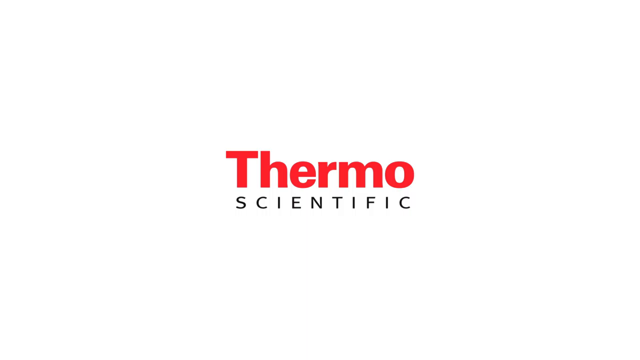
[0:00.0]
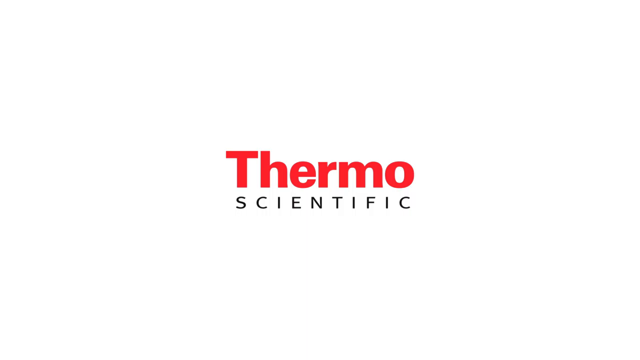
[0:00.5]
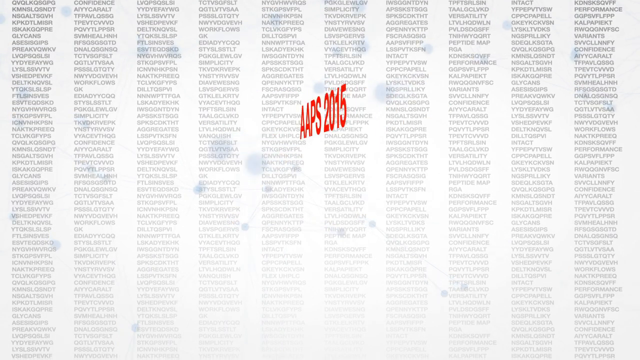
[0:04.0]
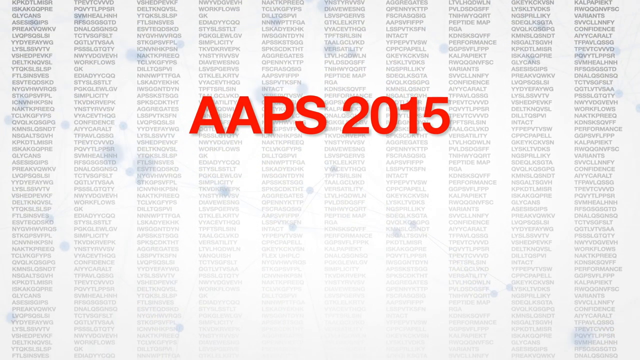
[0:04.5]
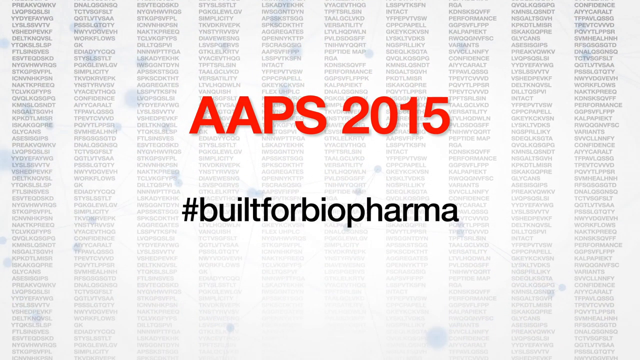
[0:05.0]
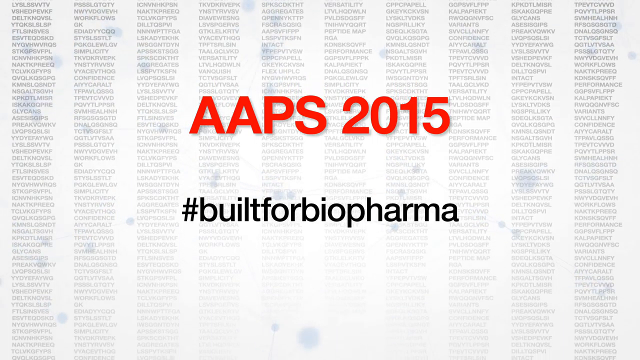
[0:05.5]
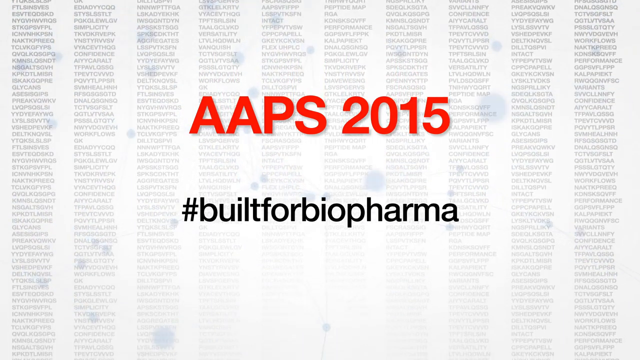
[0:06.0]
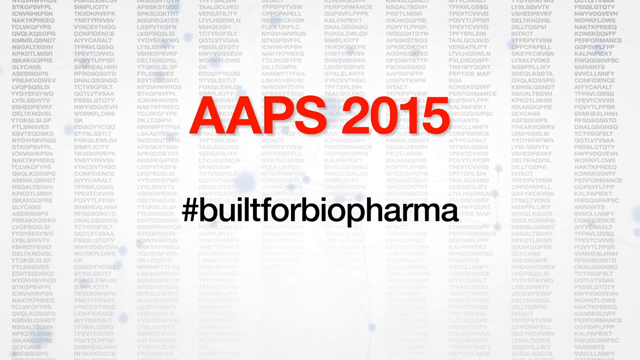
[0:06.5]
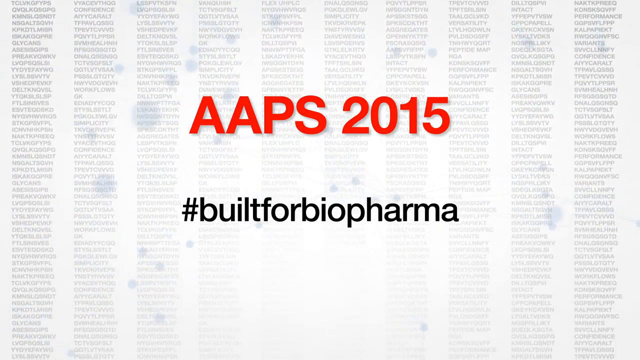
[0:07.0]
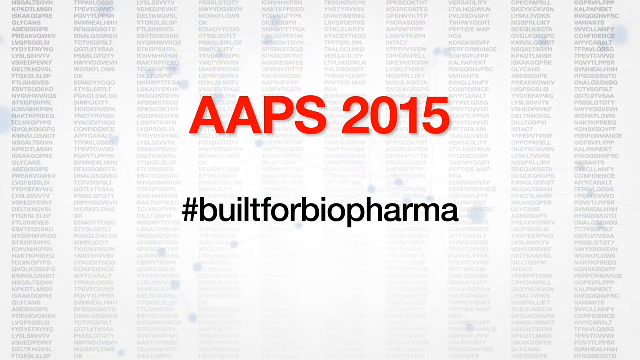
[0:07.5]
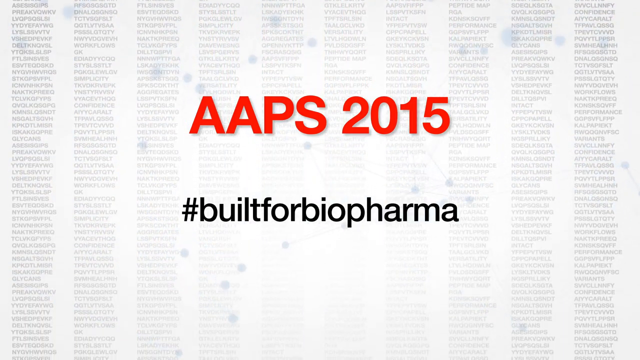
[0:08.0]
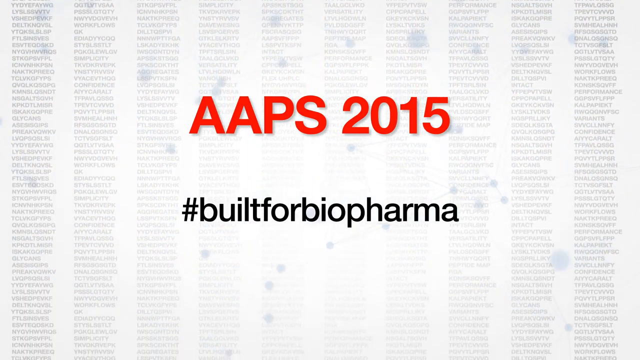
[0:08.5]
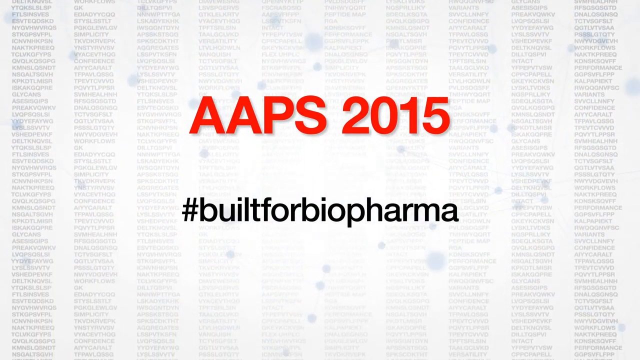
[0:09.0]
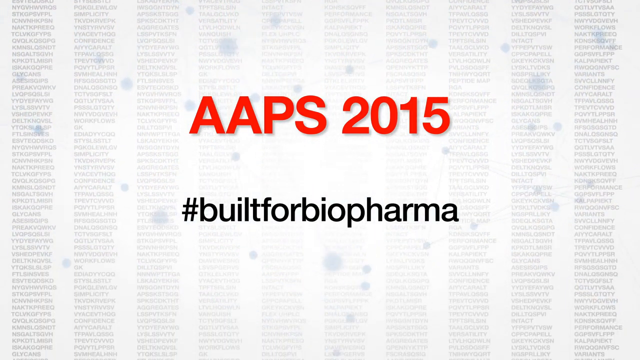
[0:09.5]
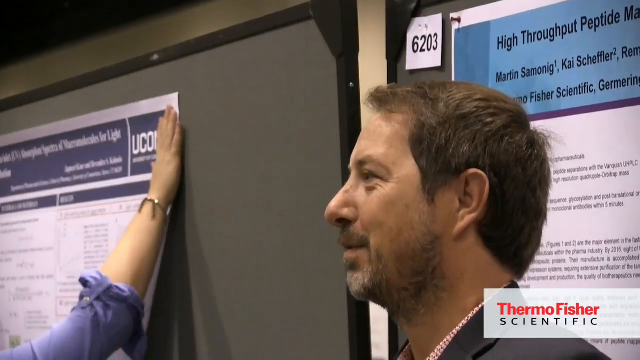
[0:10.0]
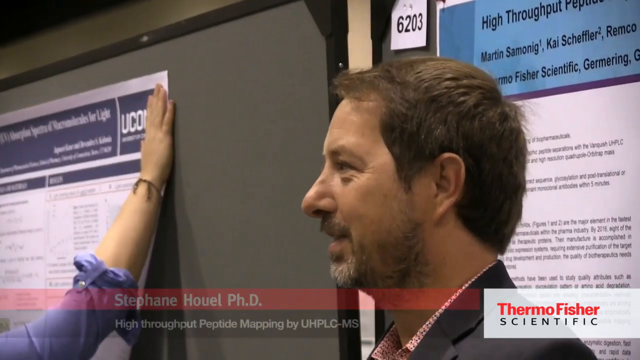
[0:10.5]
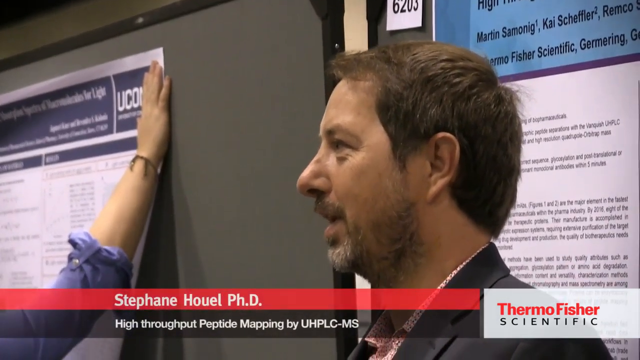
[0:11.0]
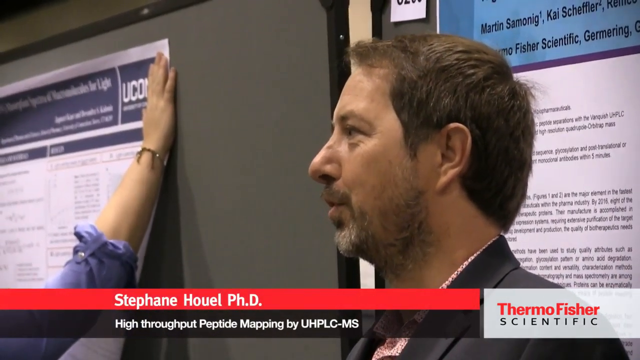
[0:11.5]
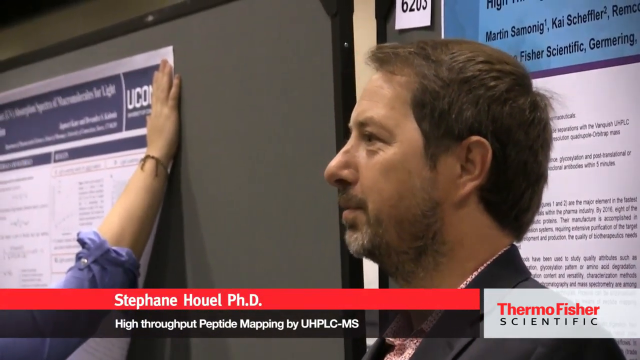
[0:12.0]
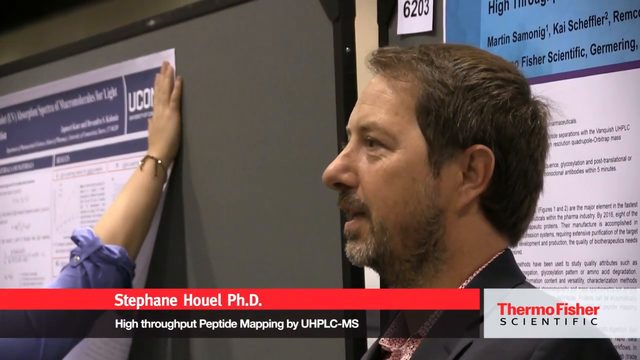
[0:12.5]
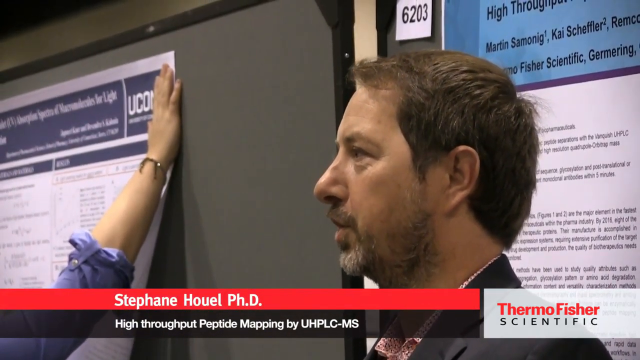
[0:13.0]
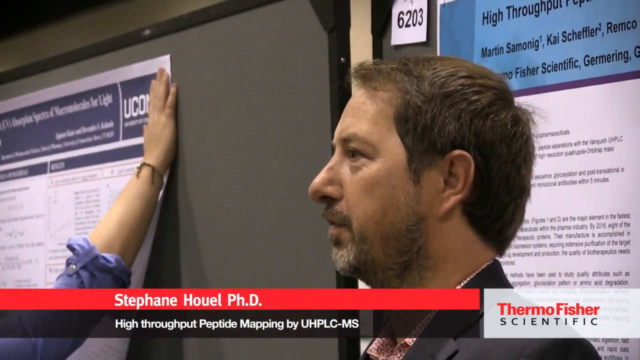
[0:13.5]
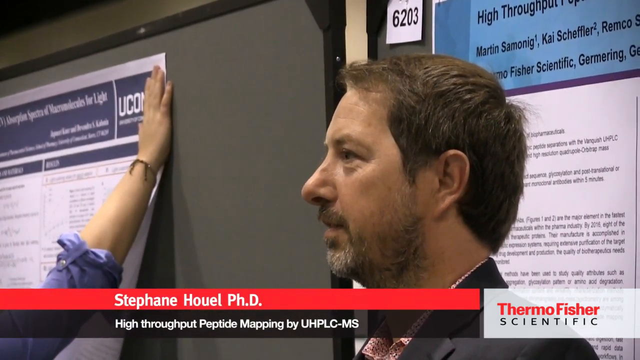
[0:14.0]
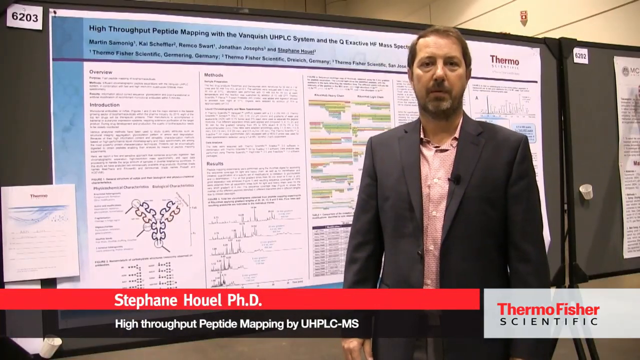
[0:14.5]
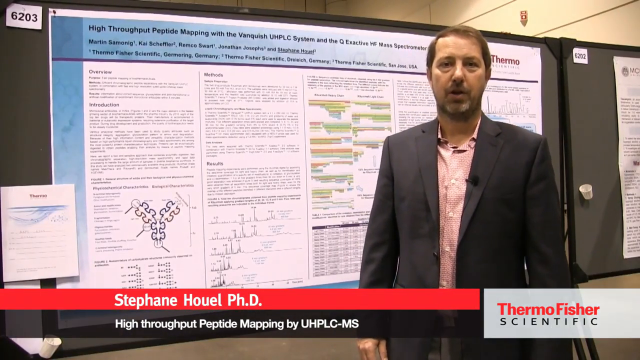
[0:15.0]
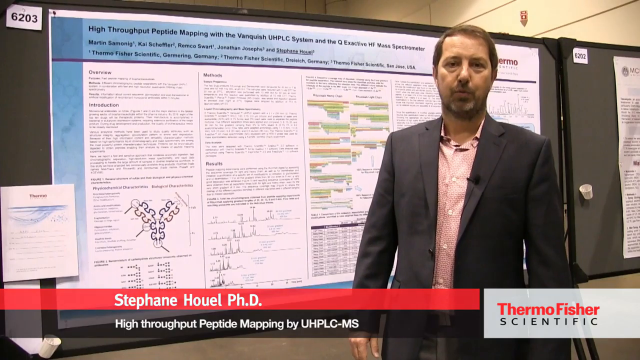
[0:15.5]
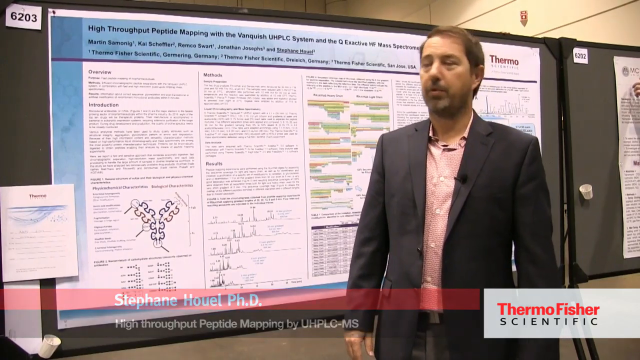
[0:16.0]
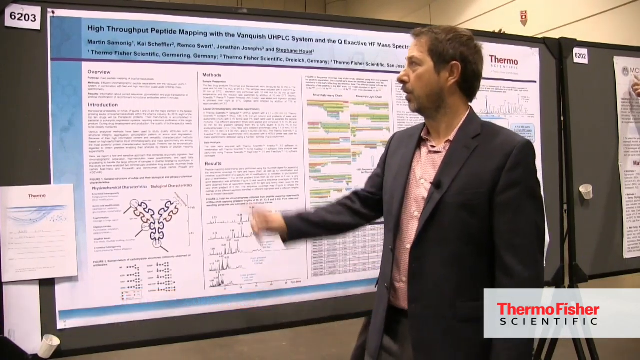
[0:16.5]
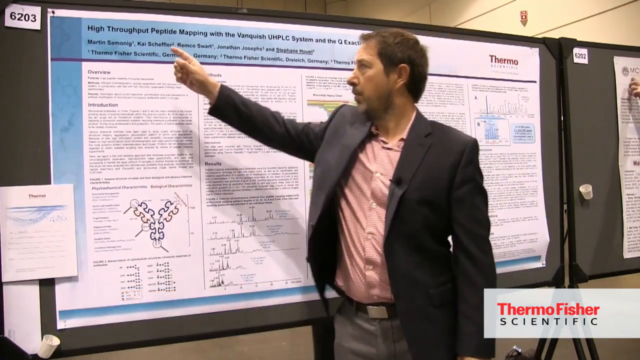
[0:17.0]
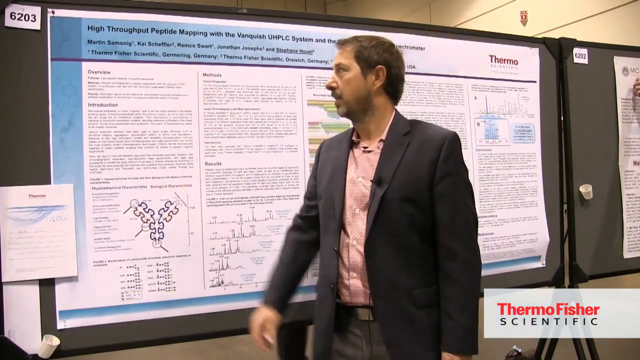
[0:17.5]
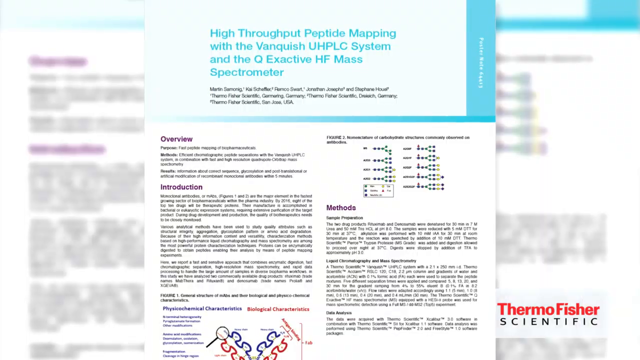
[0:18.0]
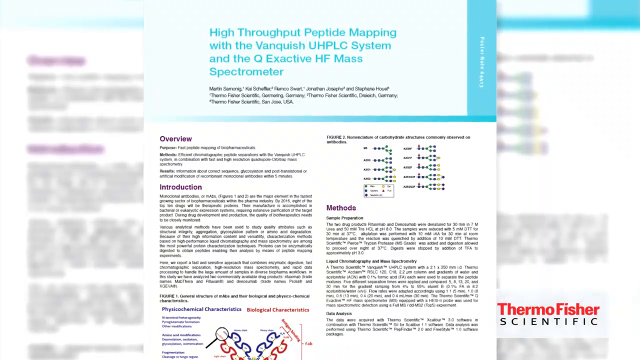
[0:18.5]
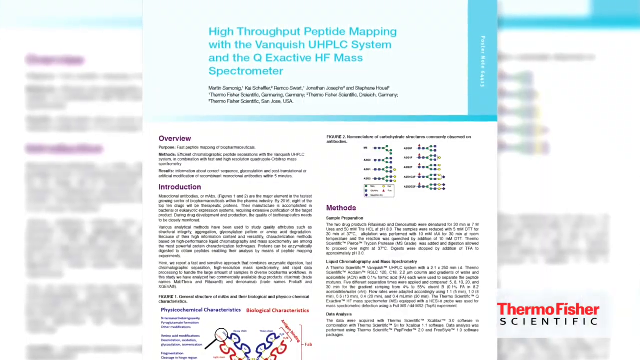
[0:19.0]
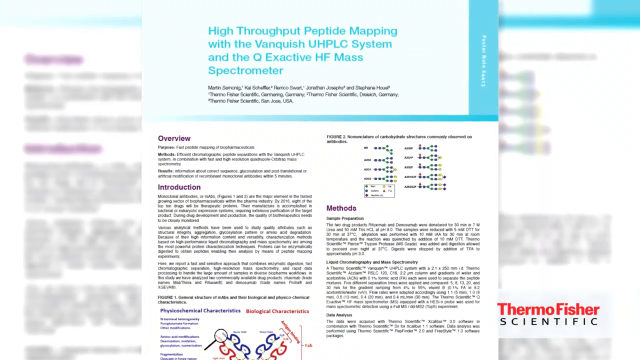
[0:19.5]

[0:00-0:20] The opening names Learning Through Thermoscientifics, AAPS 2015, built for biopharma, along with Stephan Howell, PhD, and high throughput peptide mapping. Howell is describing a process on a board behind him, which is covered with symbols, diagrams and formulas.